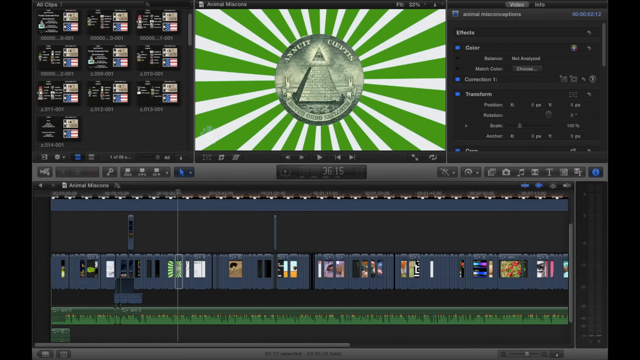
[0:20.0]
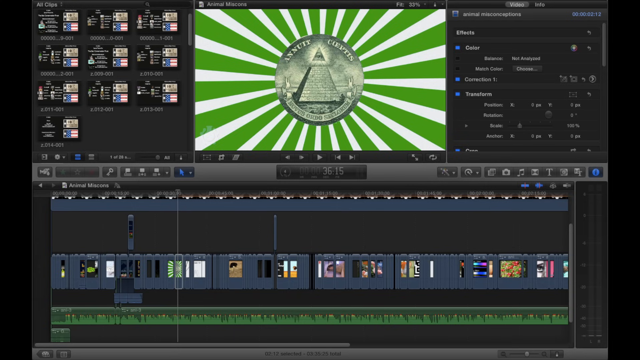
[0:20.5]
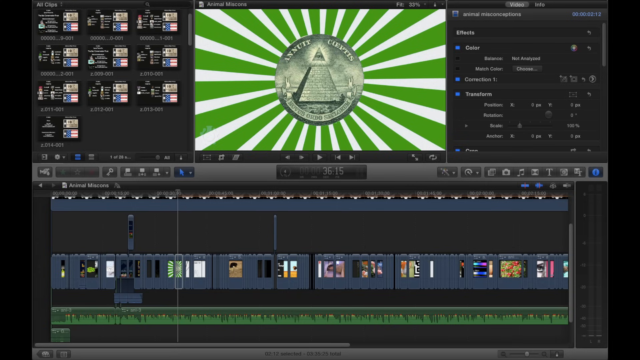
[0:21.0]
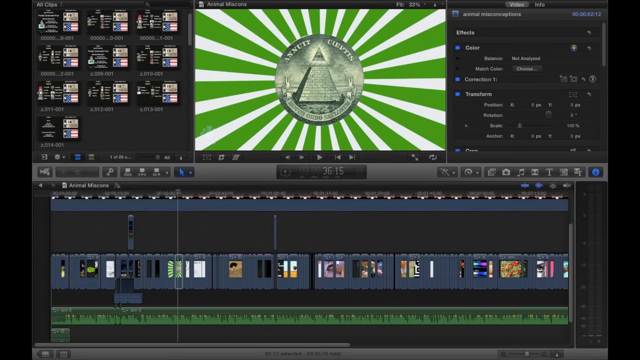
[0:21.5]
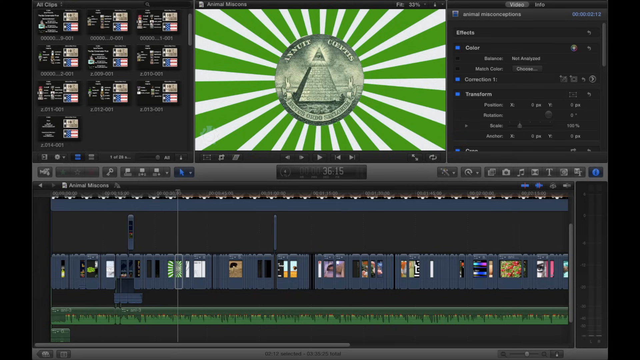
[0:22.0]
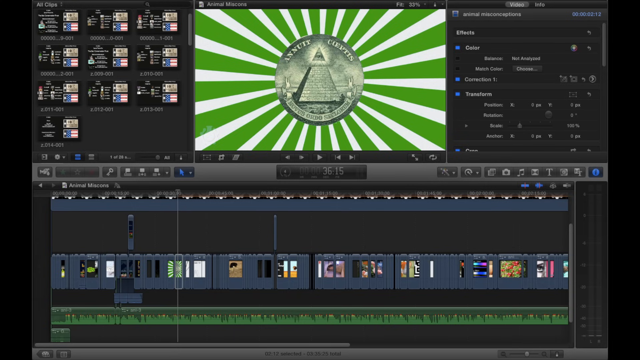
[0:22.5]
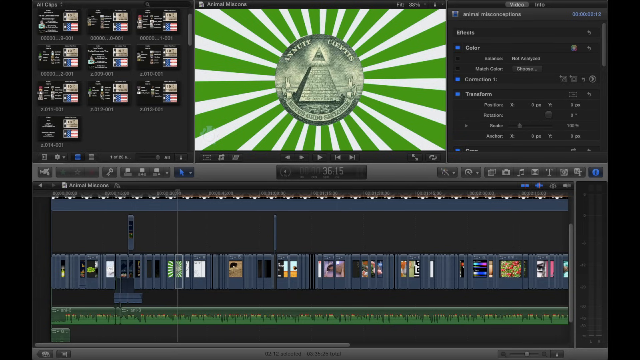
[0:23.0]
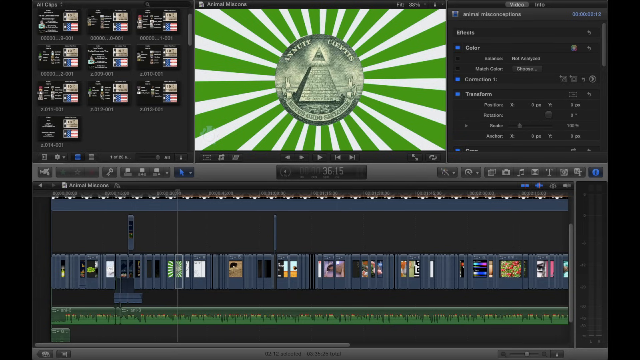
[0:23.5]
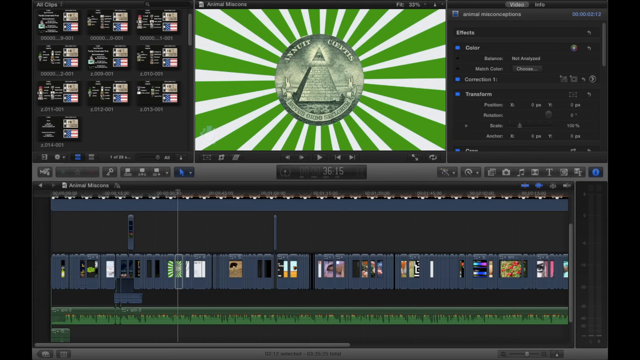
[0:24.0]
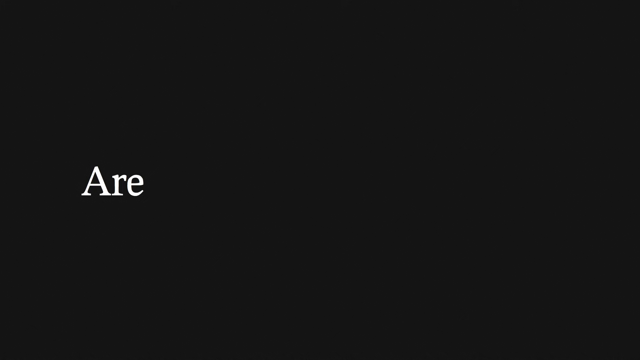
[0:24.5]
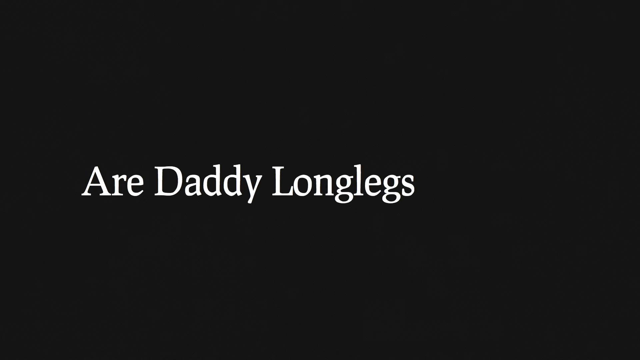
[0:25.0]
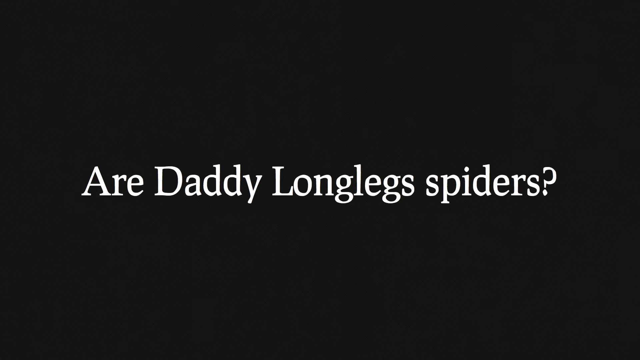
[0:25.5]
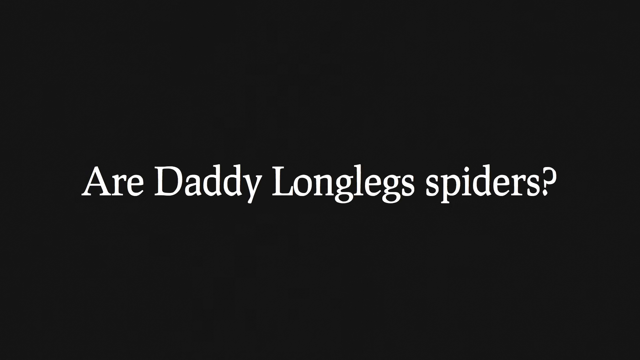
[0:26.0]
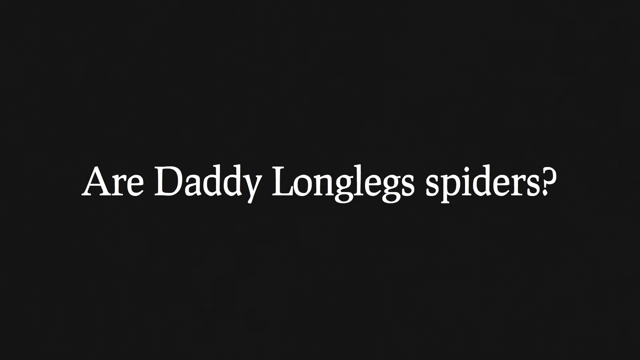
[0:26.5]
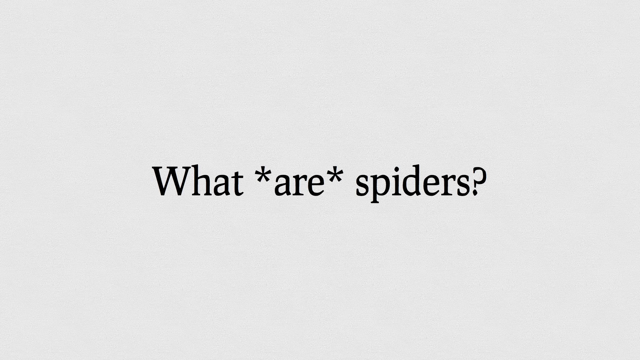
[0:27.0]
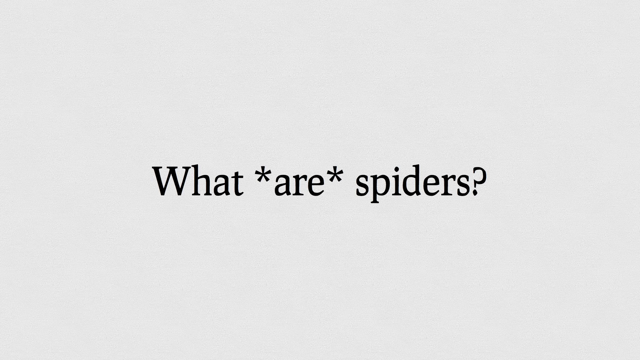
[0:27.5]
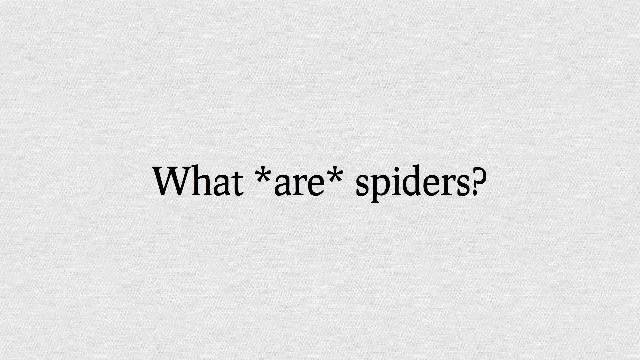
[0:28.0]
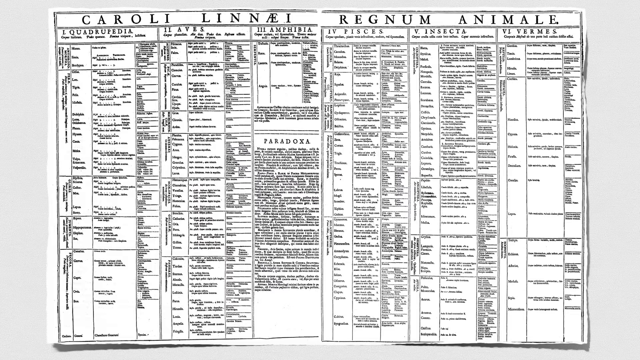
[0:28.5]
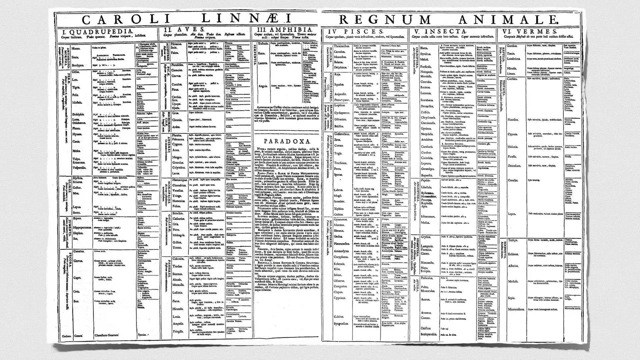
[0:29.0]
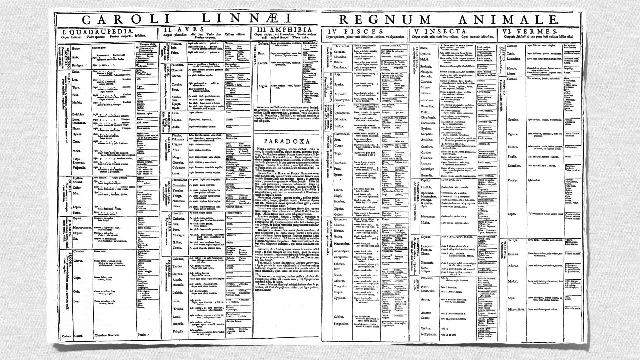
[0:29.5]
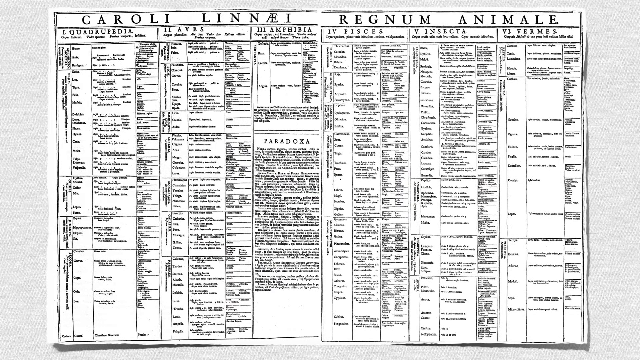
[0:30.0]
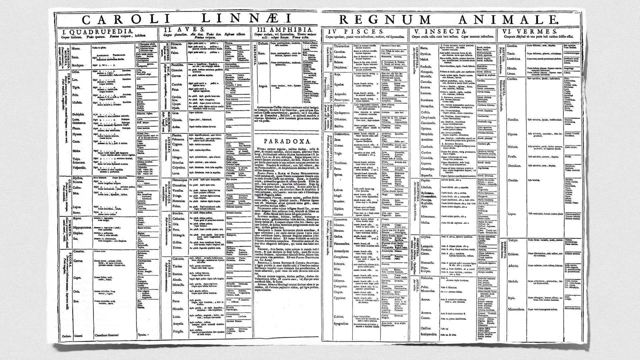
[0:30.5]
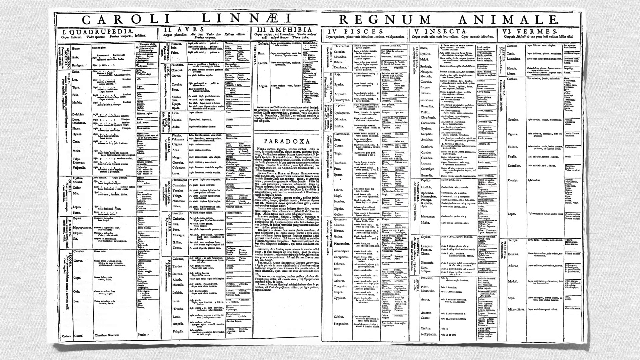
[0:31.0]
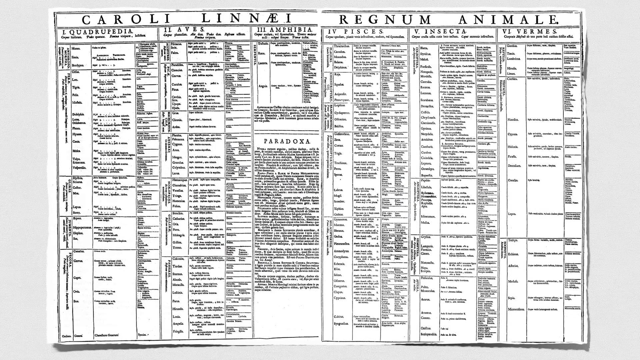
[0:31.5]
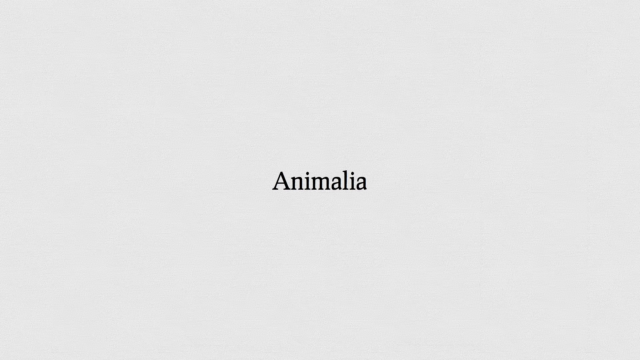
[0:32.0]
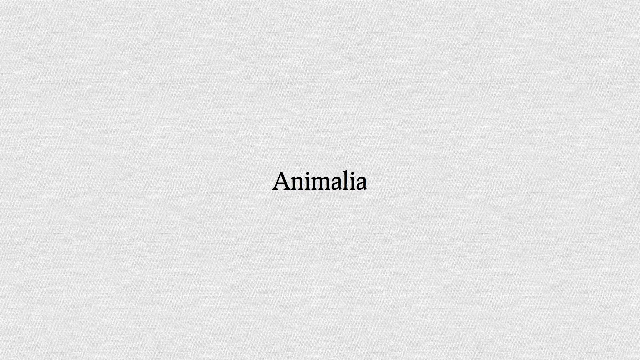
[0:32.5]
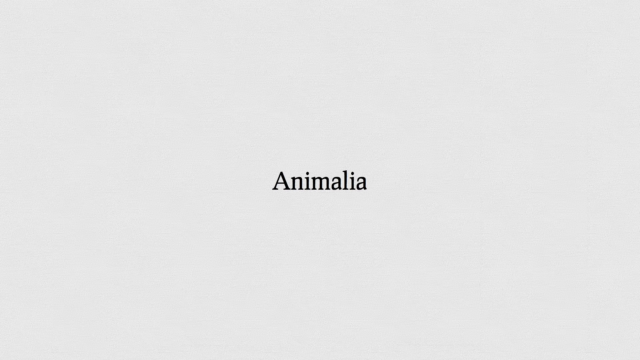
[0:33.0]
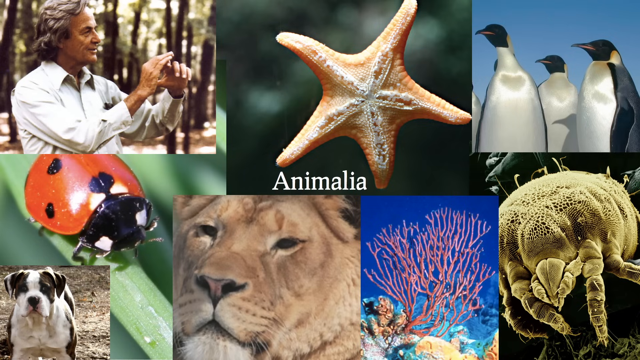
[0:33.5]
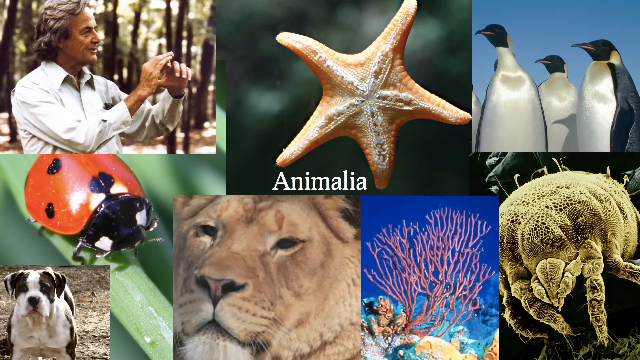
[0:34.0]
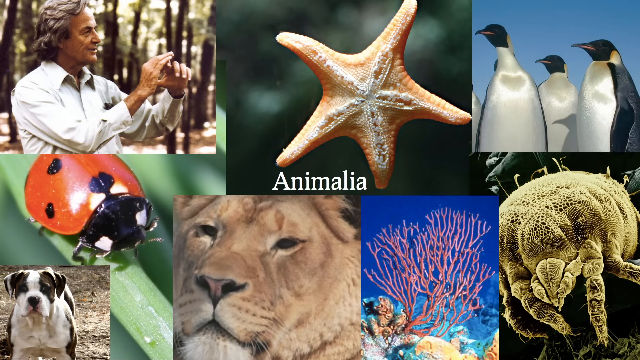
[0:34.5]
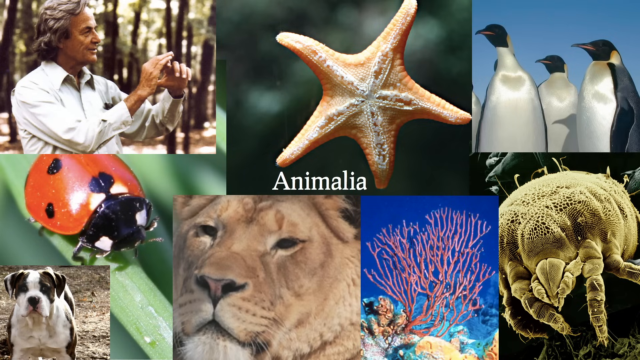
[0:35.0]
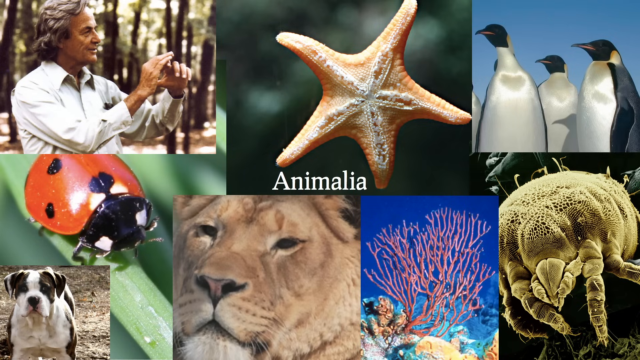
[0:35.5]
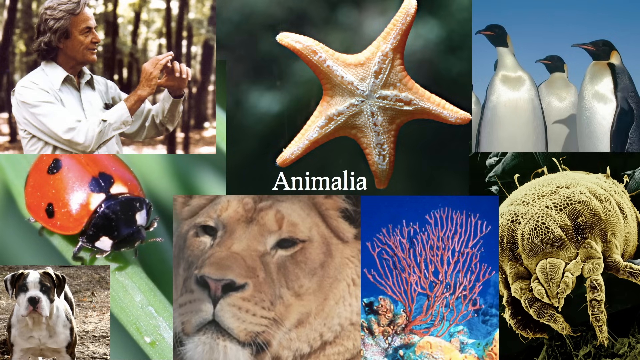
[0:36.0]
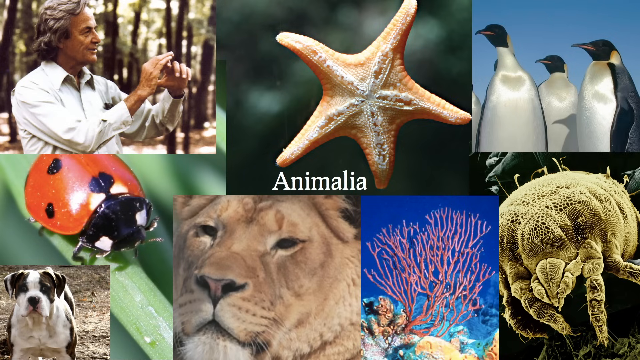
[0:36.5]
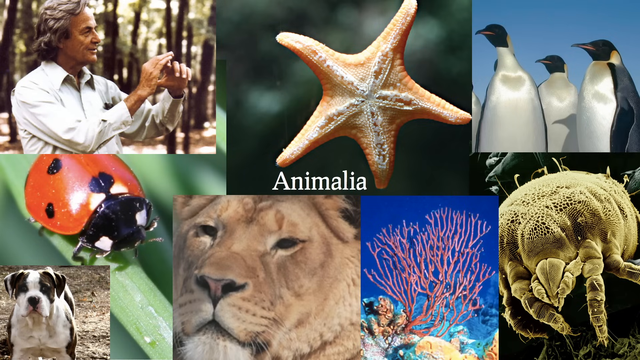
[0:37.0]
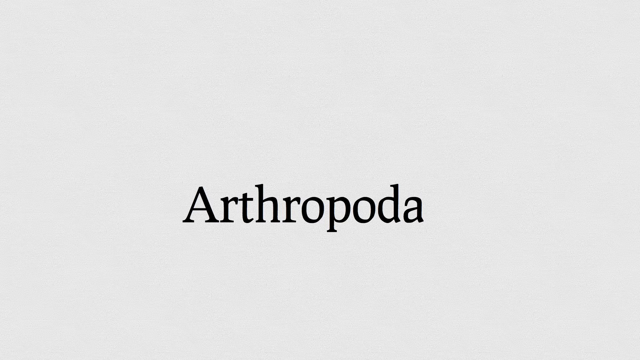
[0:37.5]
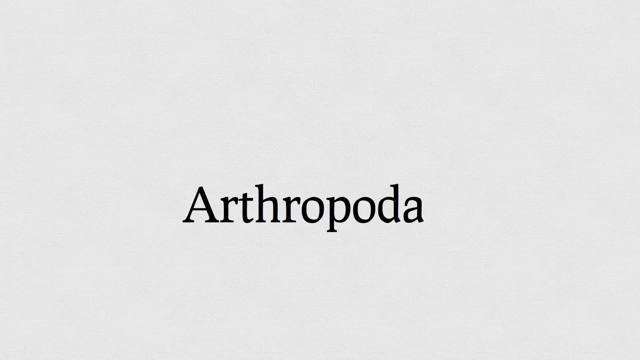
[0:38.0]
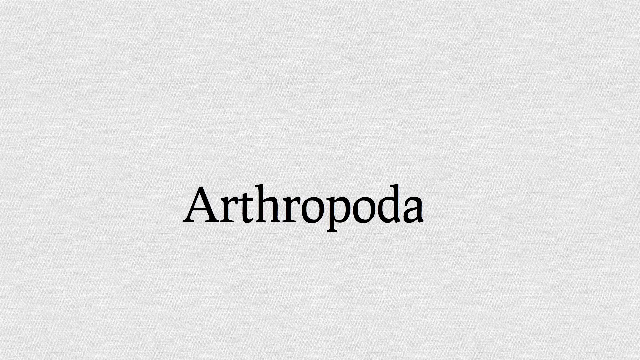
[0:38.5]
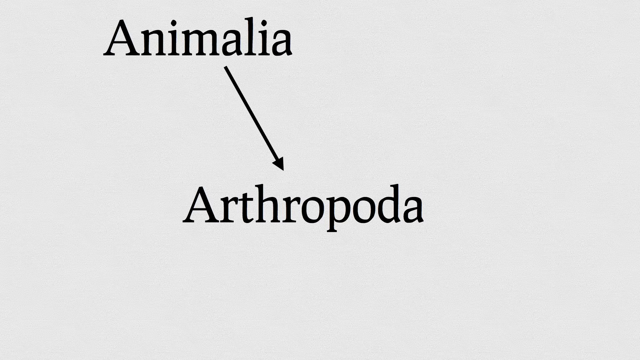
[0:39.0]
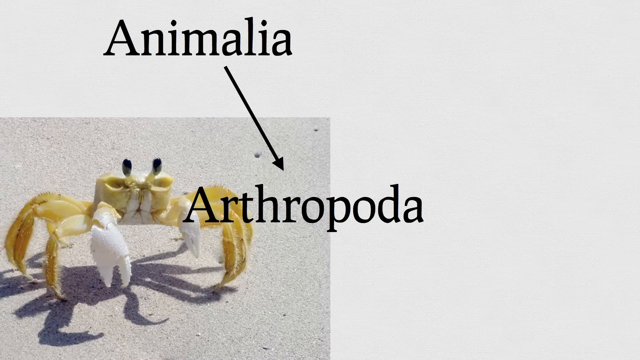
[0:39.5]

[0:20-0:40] The video moves to a video-editing workspace; at its centre, white and green rays emit from a dollar symbol containing the pyramid with the eye above it. A title screen follows in which words appear one by one to form the sentence "Are daddy long legs spiders?" Then a white title page says "What are spiders?" Next is what seems to be a categorization of animals, apparently in Italian: a white paper with numerous blocks of columns and rows of different lengths with different inscriptions in the columns. A white title page says "Animalia", followed by a title page with numerous animals on it, including a starfish, a dog, termites and penguins. Another title page says "Animalia" with an arrow pointing toward "Arthropodia", and shortly after, an image of a white and yellow crab pops up.